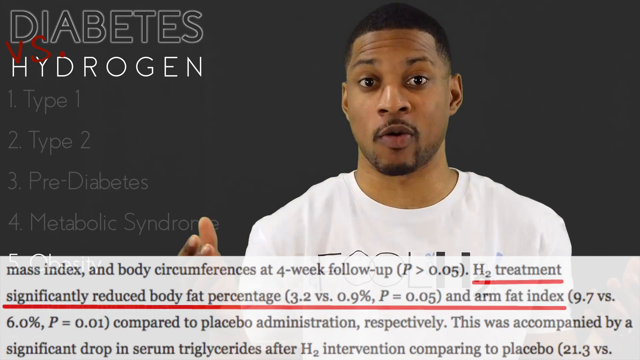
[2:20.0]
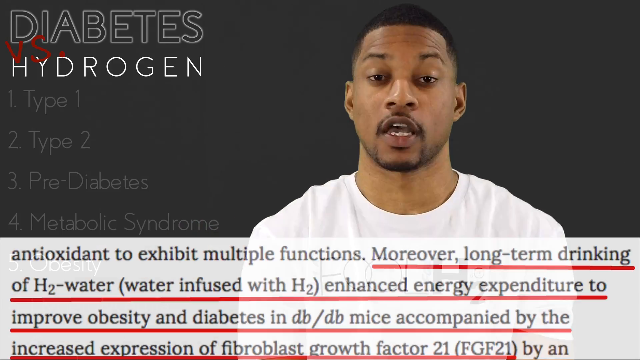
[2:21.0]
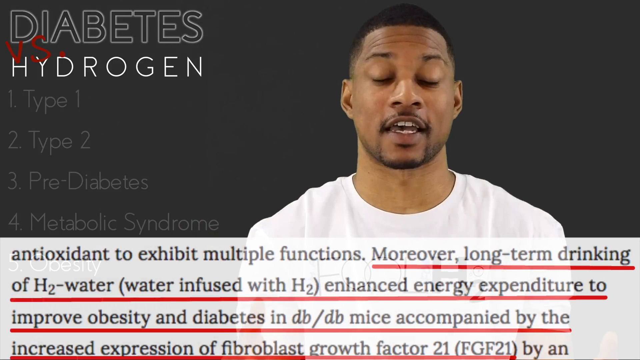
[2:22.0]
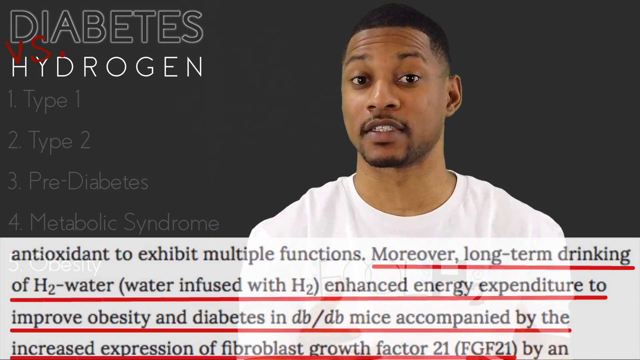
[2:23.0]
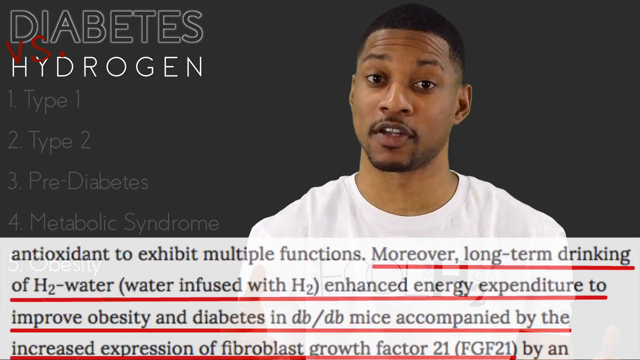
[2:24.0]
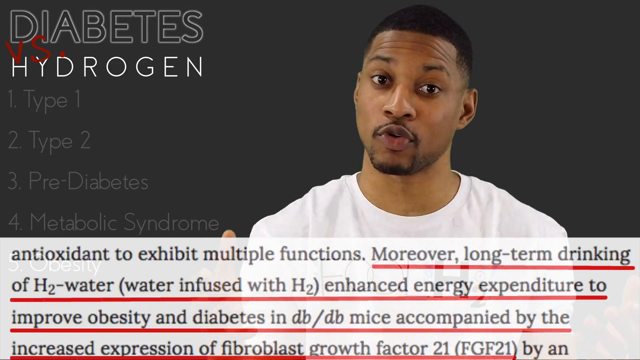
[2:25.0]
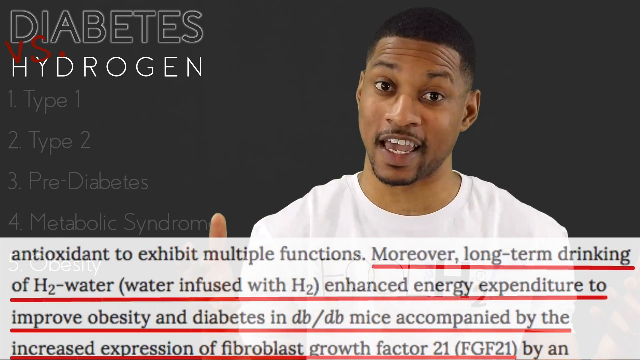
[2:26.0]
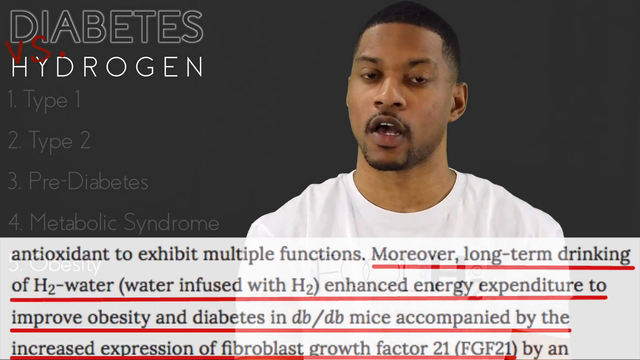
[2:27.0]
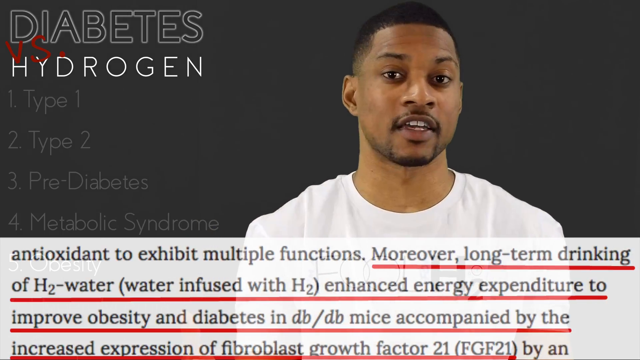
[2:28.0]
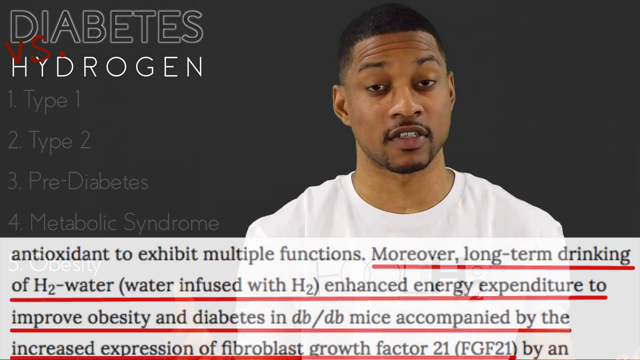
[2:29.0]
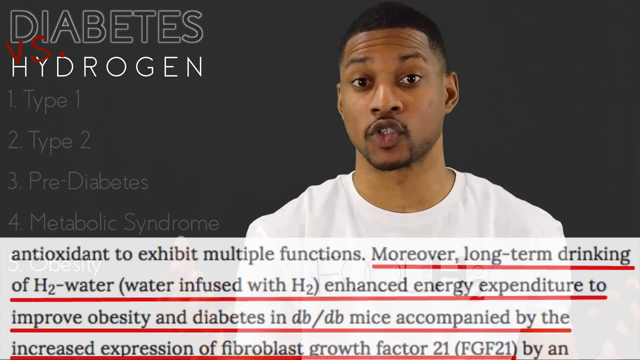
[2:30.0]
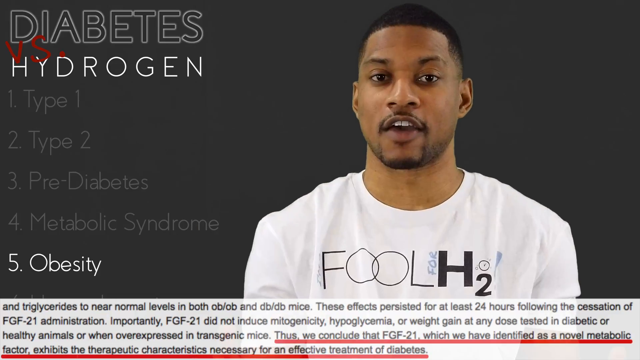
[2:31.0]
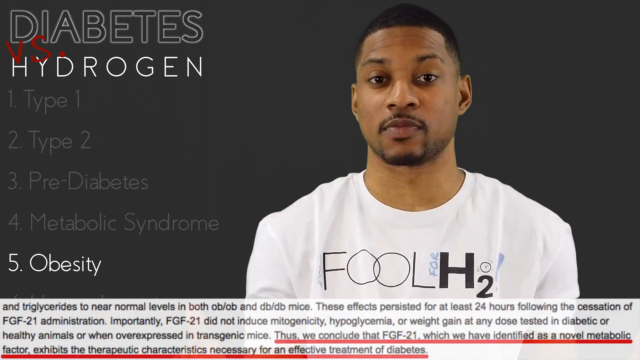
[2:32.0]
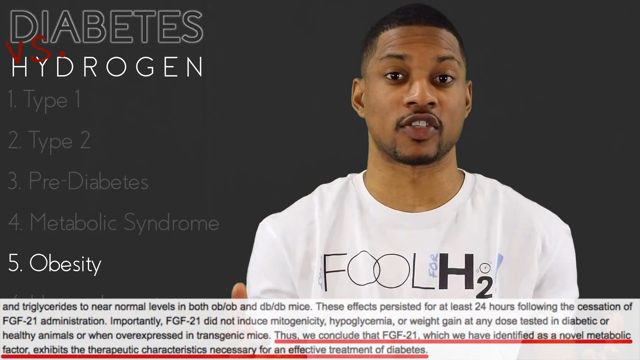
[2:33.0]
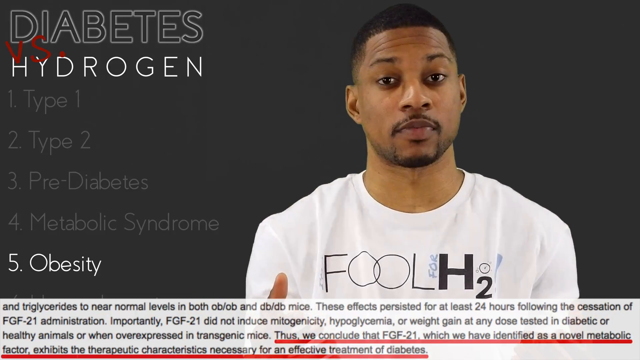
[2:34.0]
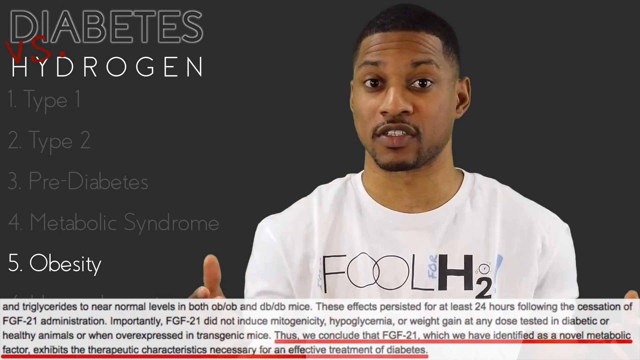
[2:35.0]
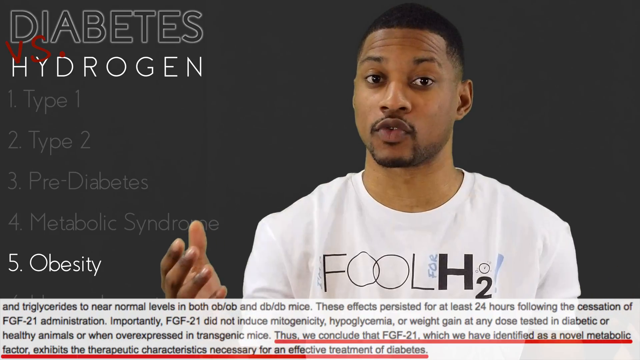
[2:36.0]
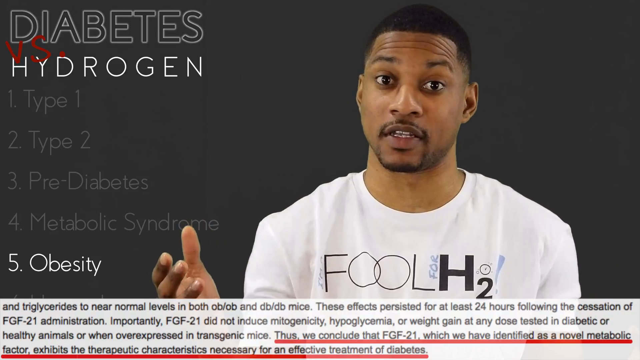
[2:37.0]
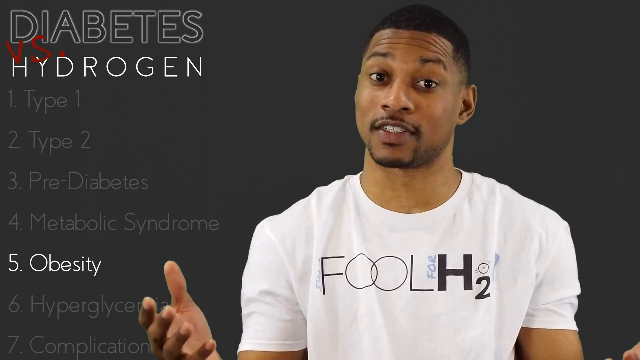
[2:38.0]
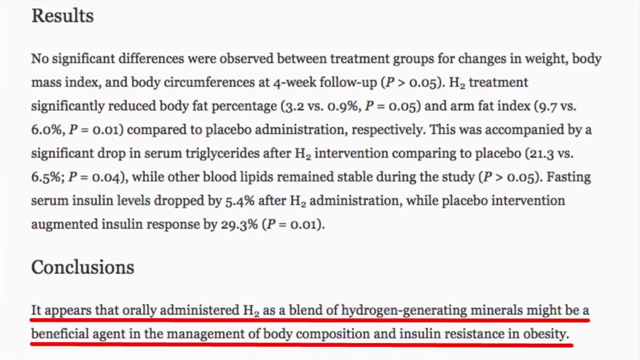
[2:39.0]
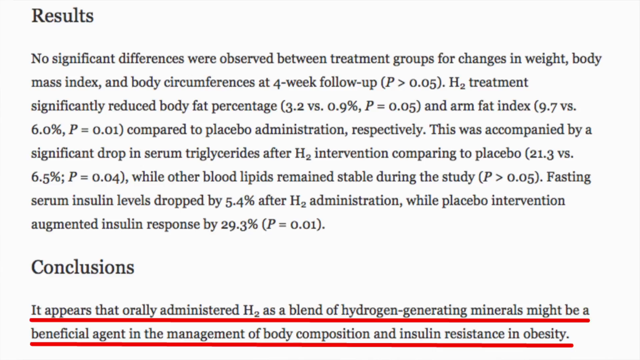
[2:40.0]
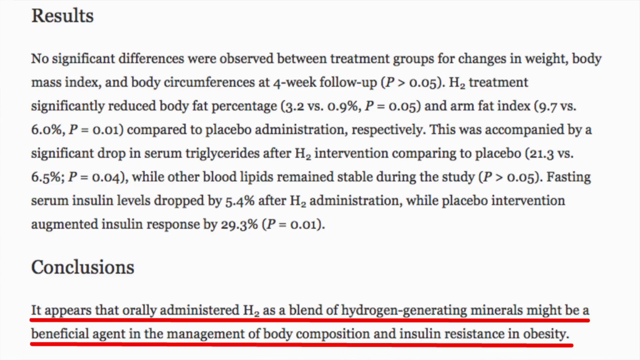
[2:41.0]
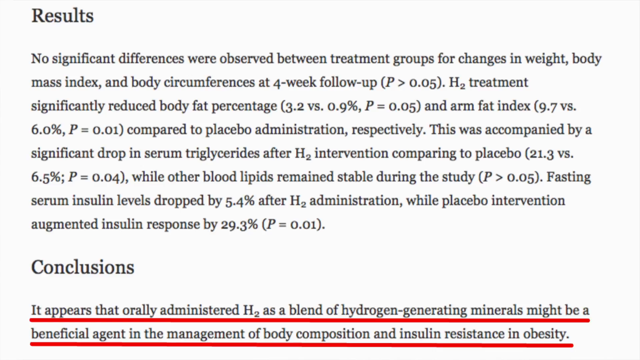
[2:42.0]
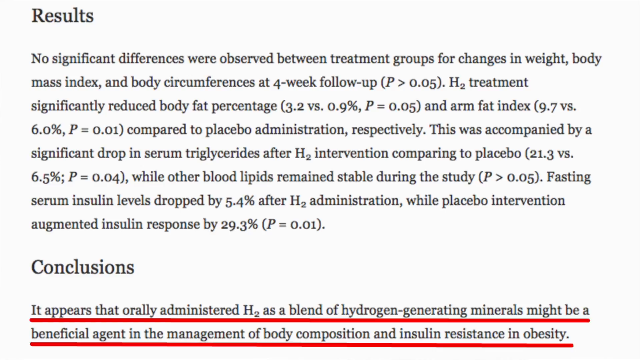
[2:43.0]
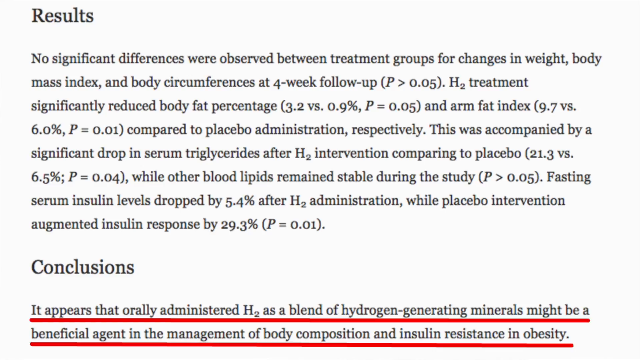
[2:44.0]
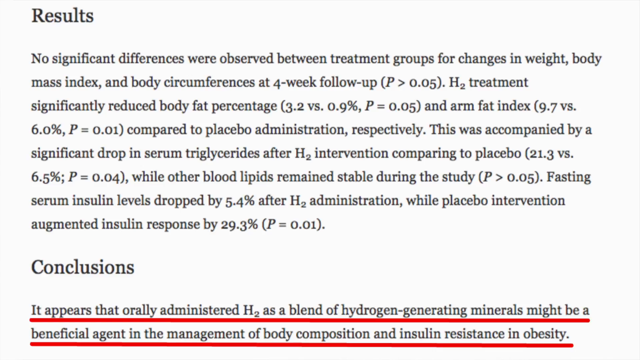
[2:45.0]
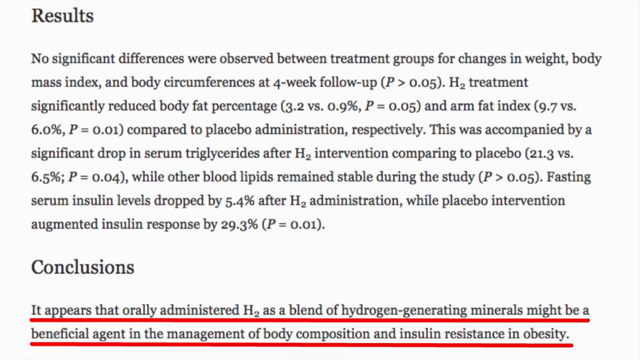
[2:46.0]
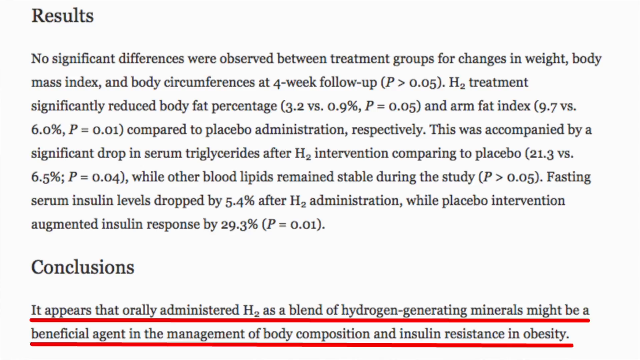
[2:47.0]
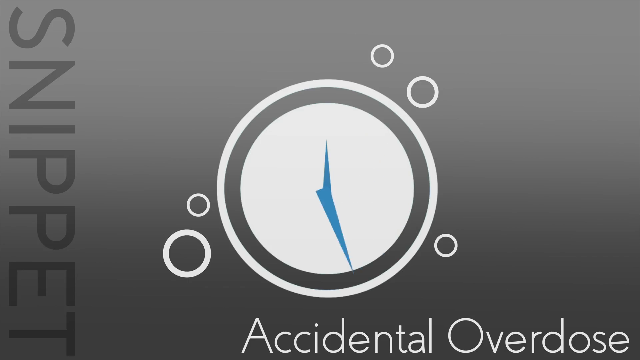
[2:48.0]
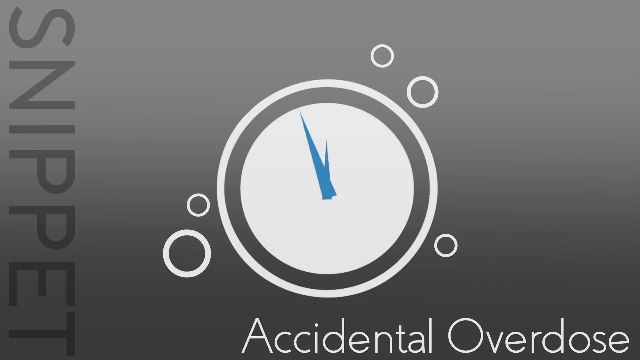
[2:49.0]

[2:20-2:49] The same man appears, and the content relates to diabetes and sugar, including information about which foods to eat and which to avoid.